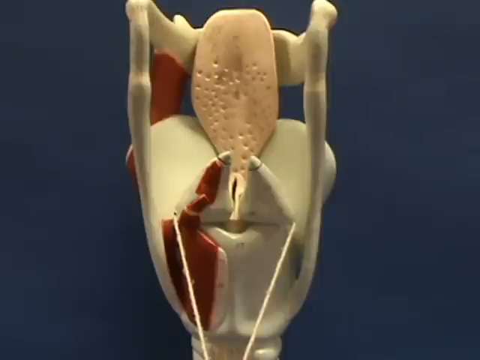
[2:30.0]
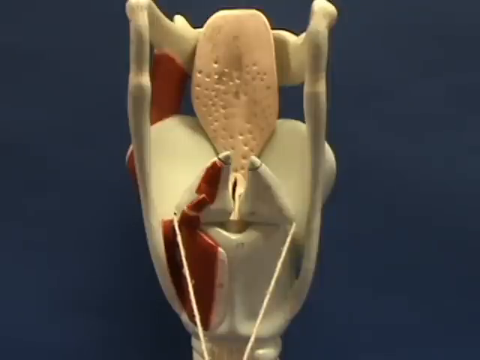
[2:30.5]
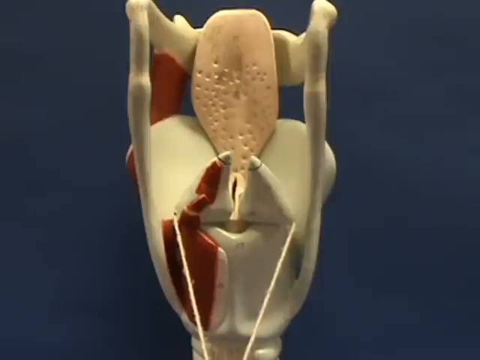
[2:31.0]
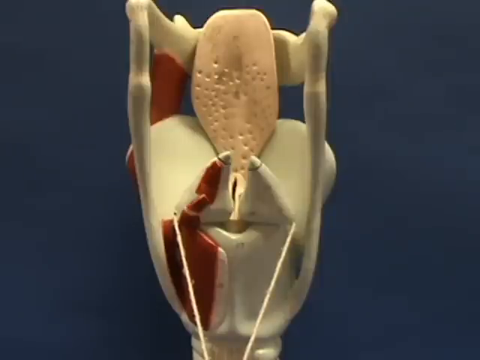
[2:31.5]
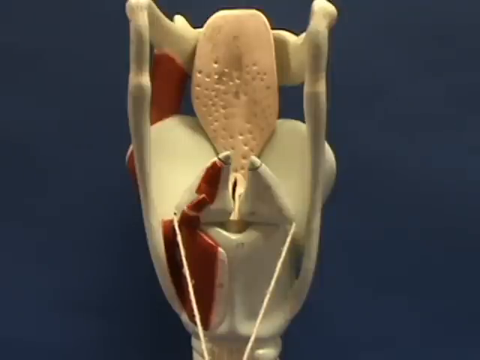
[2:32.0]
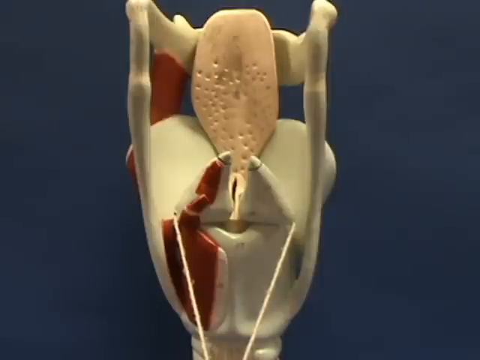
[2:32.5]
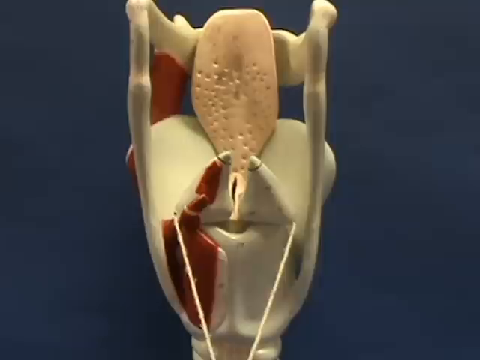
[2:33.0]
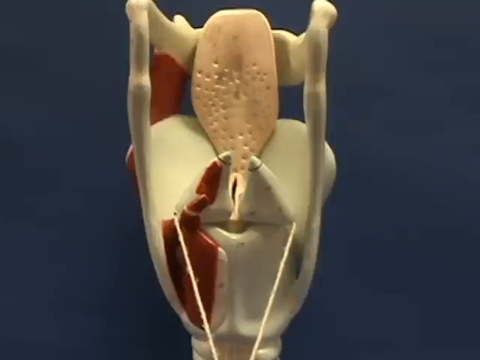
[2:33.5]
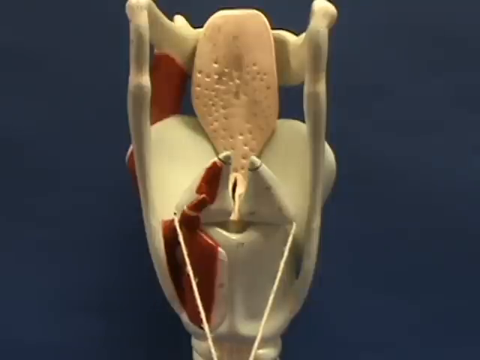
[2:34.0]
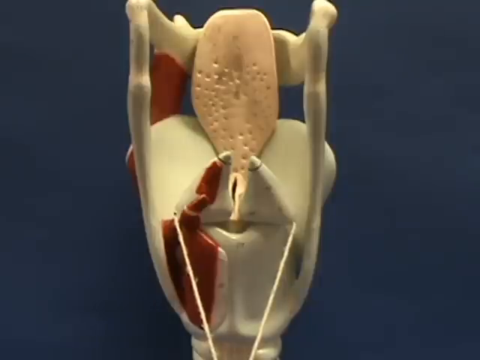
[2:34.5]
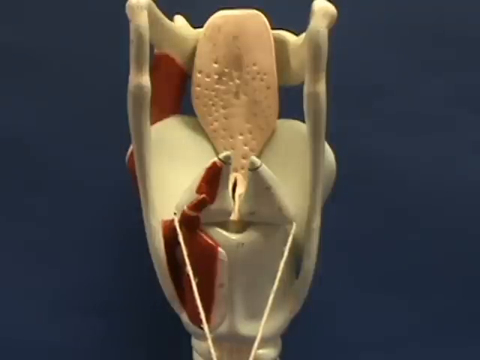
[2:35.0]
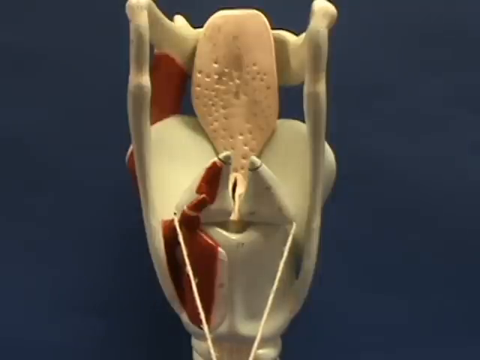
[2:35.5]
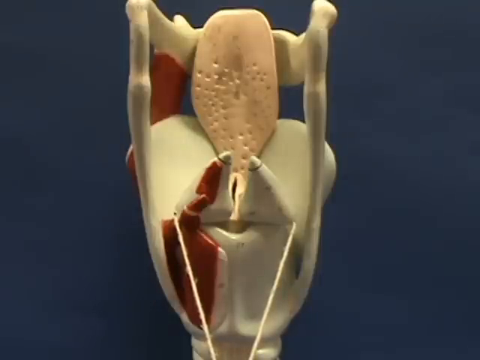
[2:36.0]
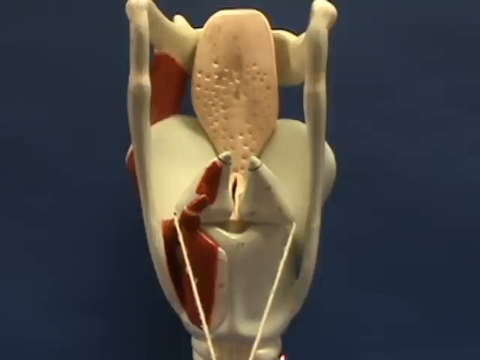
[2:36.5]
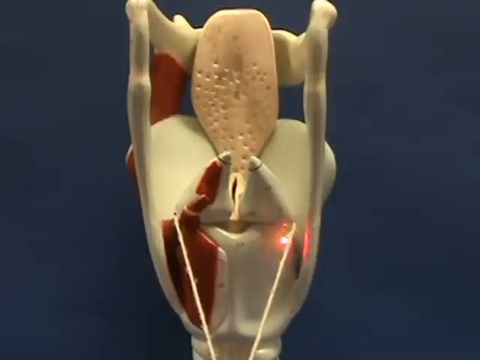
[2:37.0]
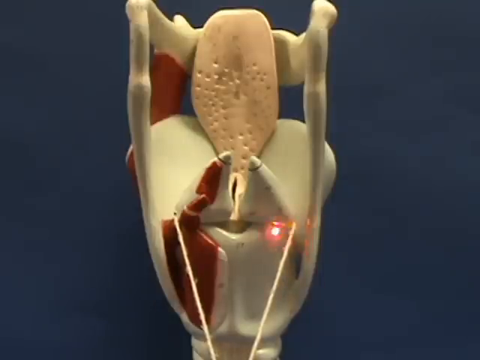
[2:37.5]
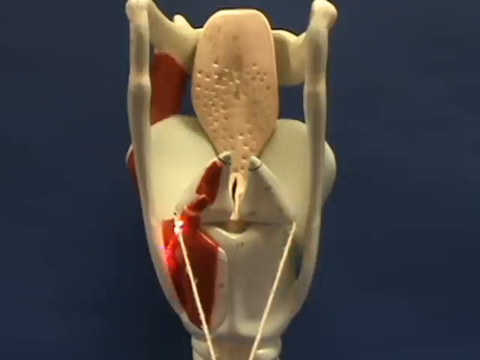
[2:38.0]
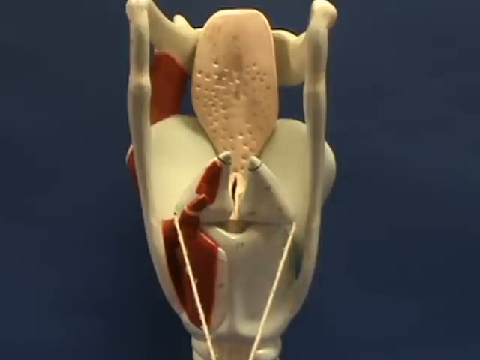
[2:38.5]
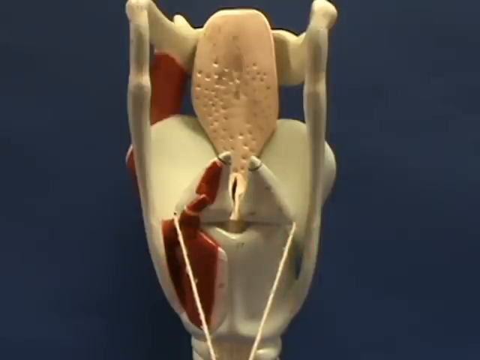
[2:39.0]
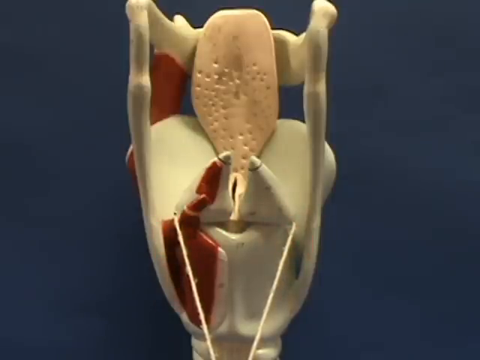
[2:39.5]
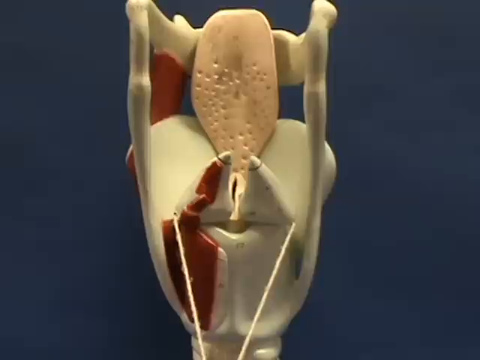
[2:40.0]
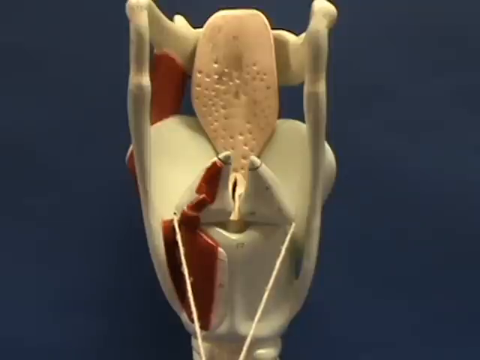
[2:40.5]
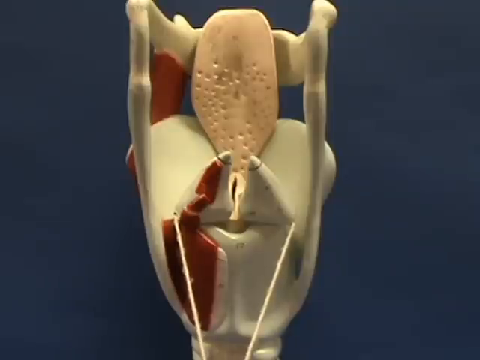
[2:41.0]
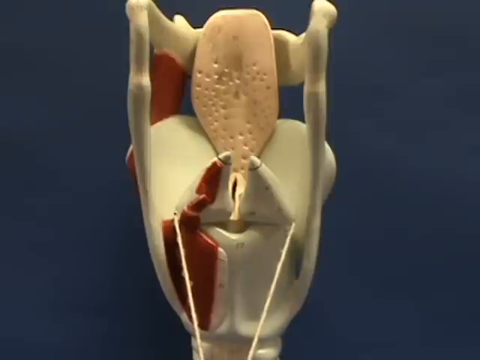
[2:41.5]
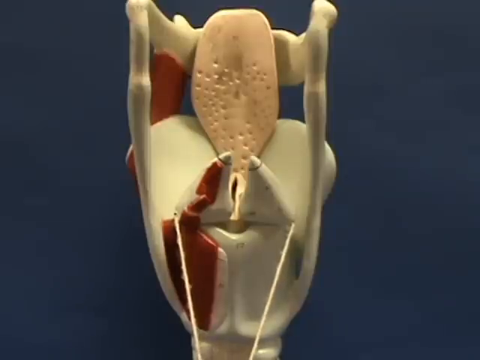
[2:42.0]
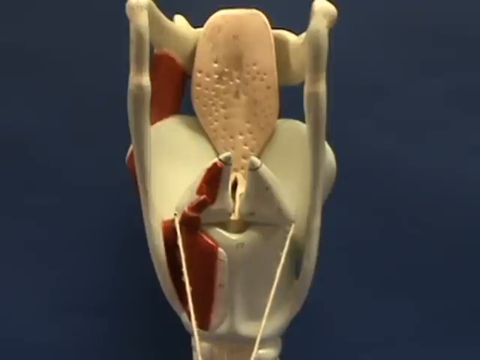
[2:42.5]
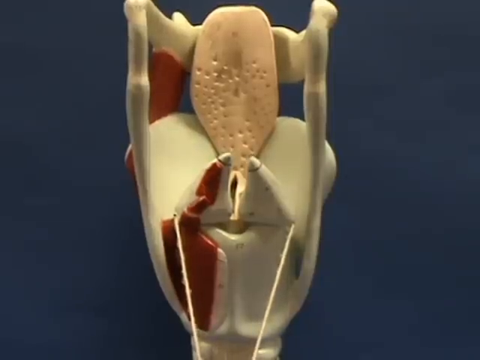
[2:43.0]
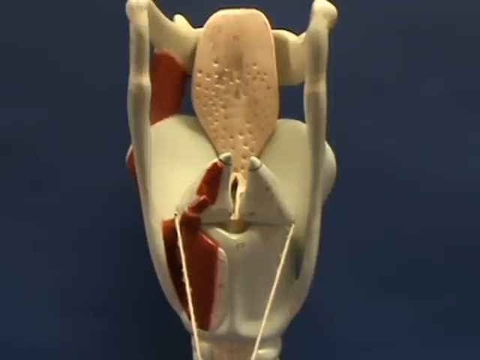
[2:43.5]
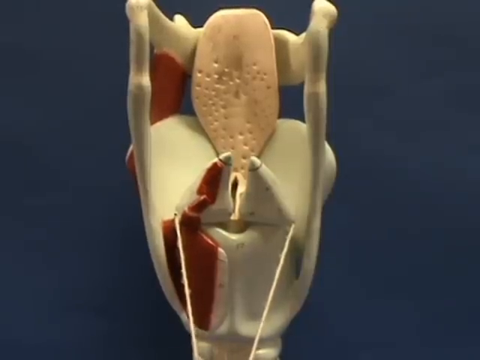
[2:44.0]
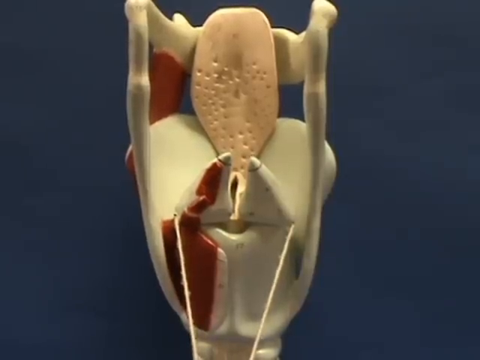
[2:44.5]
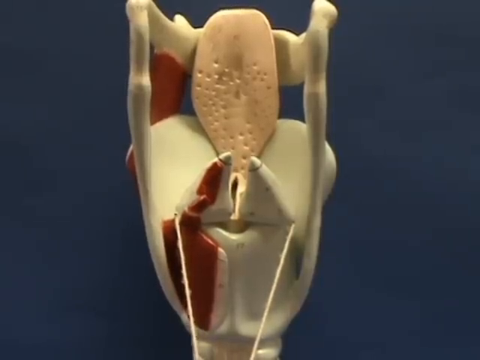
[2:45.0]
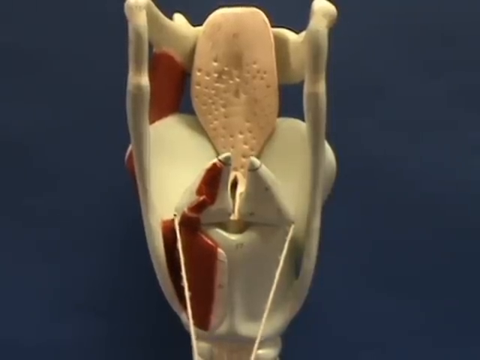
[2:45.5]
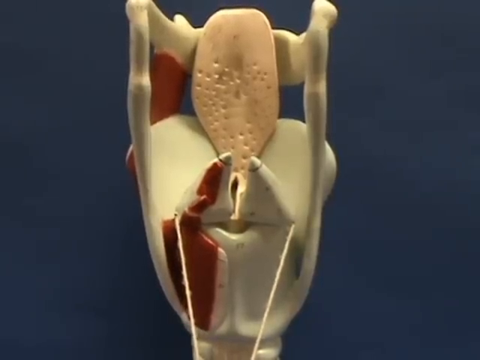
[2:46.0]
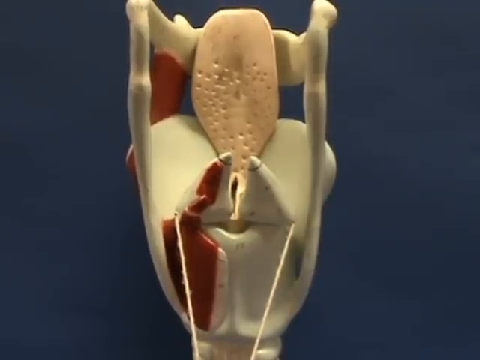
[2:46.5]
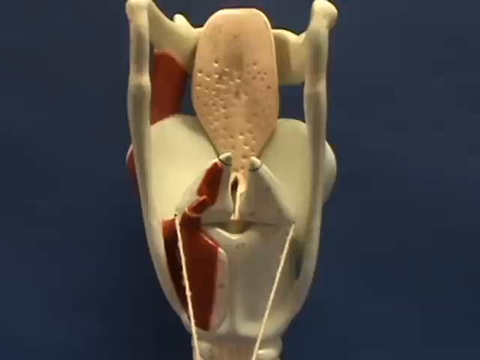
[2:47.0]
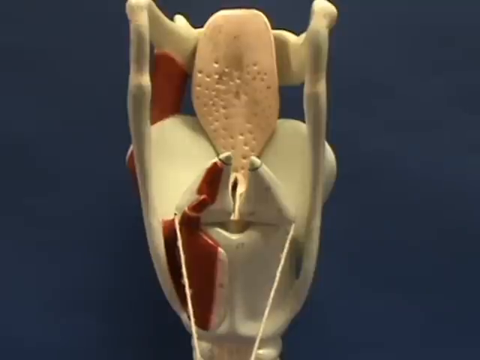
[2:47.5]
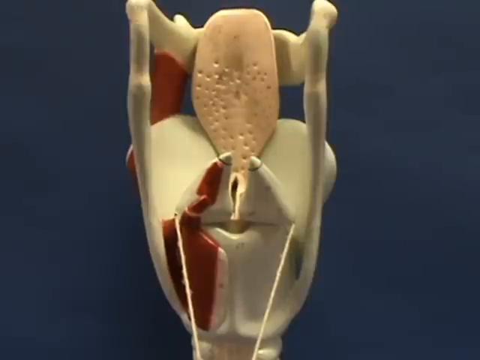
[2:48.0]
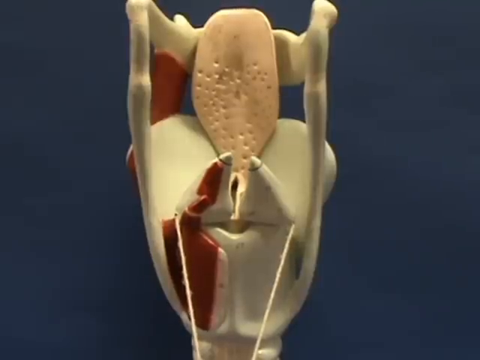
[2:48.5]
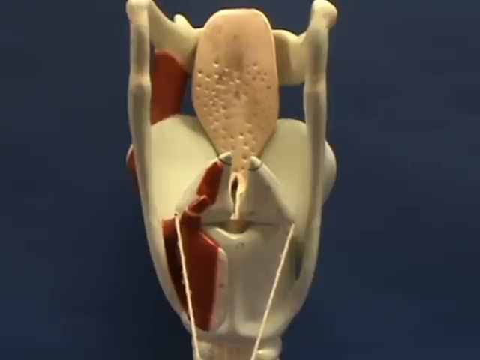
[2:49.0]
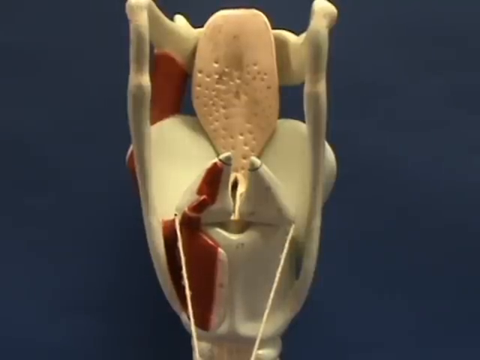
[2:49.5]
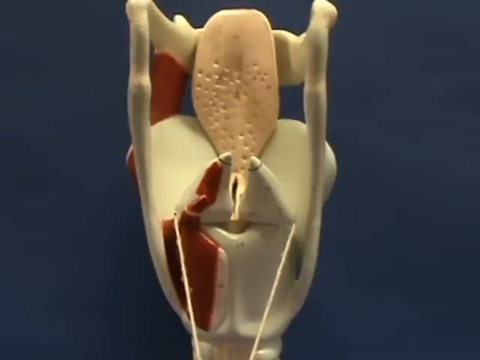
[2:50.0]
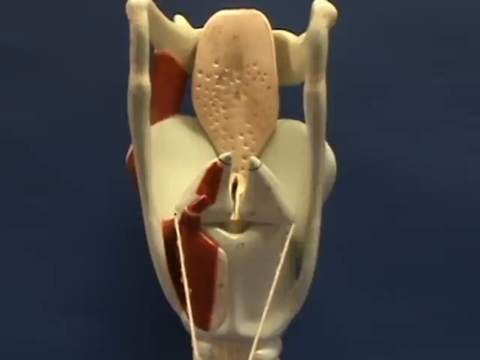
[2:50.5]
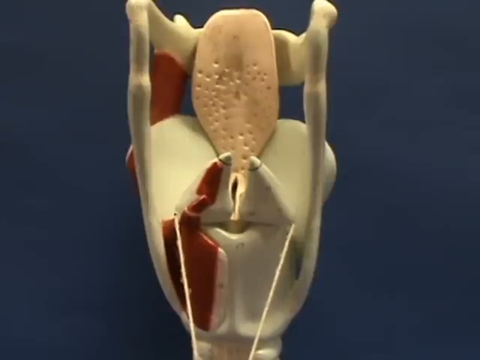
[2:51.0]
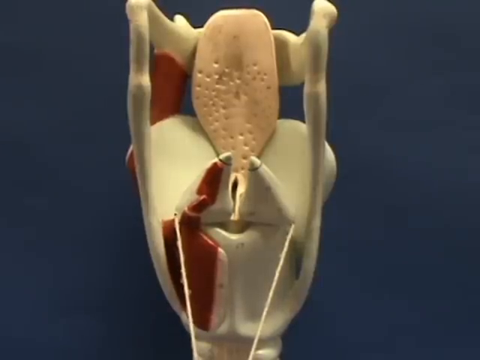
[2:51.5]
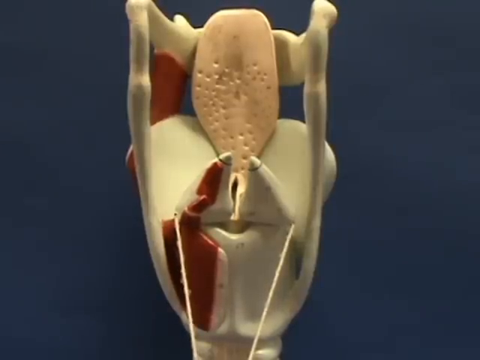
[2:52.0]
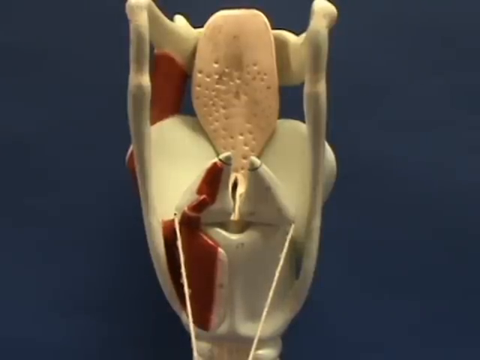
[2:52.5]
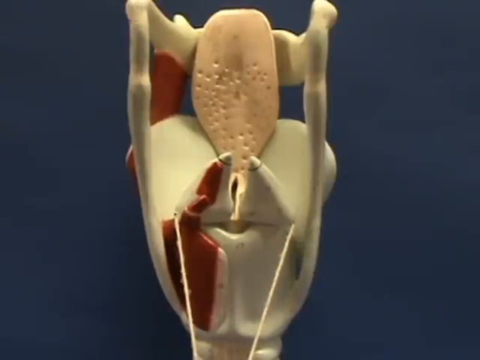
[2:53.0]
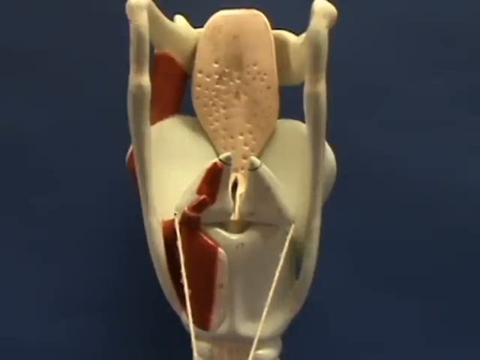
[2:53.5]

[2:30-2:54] The background is dark blue, and in front of the dark blue wall is a model of a larynx that, the way it is sitting, kind of looks like a face. Bones start together at the bottom, sprout out a little as they go up, then stay an even distance apart until the very top, where a curved bone connects them. On that top bone is a tan piece that looks like a tongue. The bones are red. In the middle of the model are two spiky white bone pieces that are identical except that the left one has a blood-red stripe down its outside and the right one does not. Someone with a laser pointer points out different areas on the model.